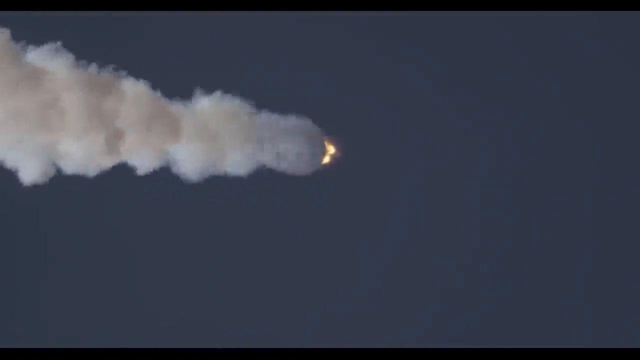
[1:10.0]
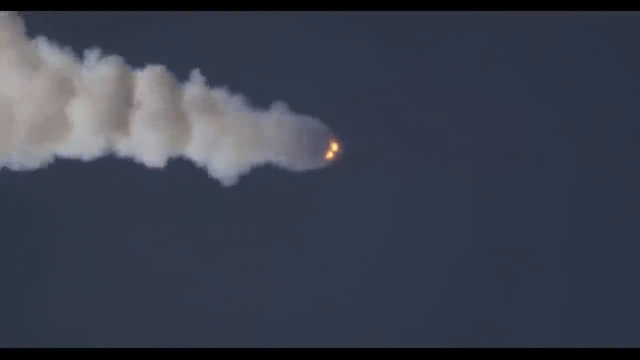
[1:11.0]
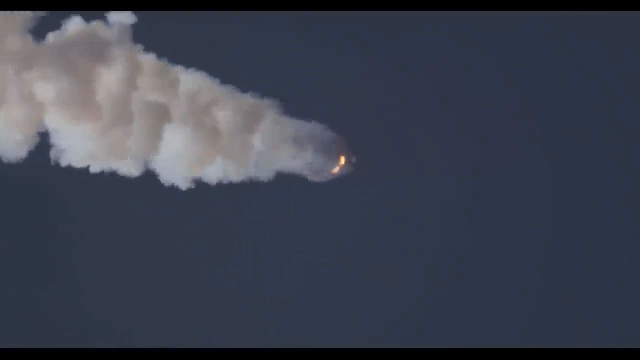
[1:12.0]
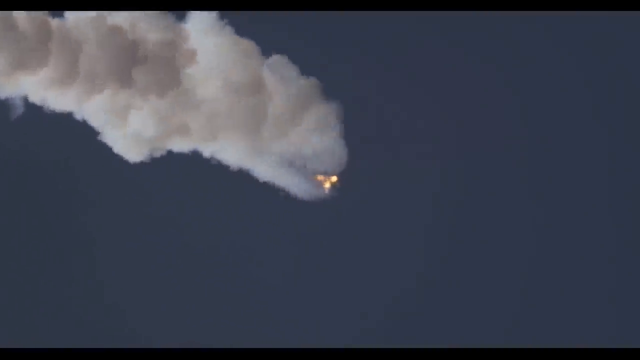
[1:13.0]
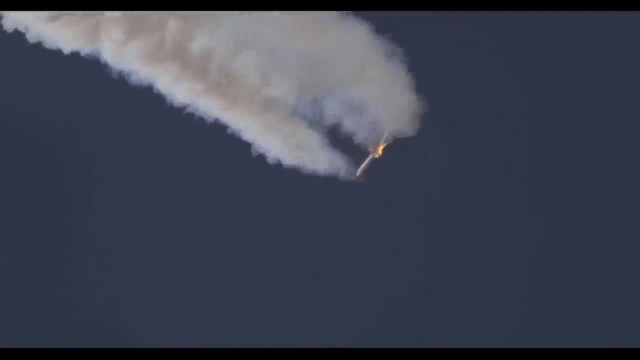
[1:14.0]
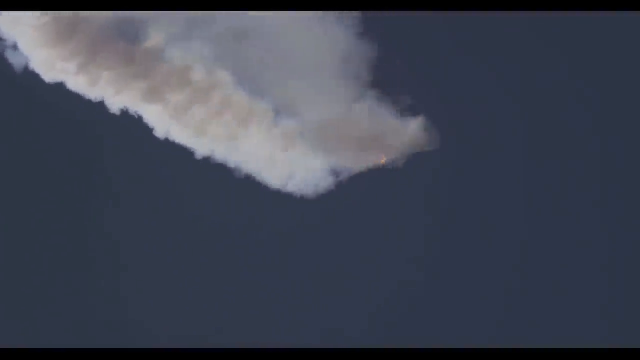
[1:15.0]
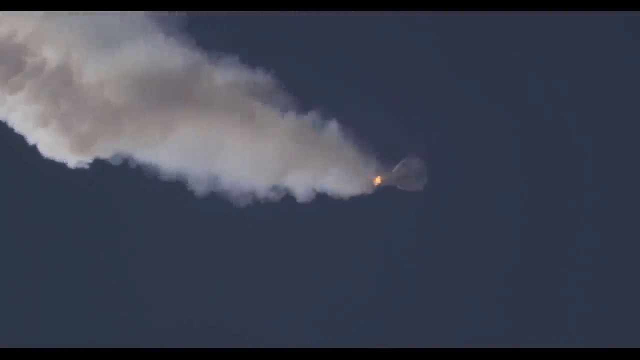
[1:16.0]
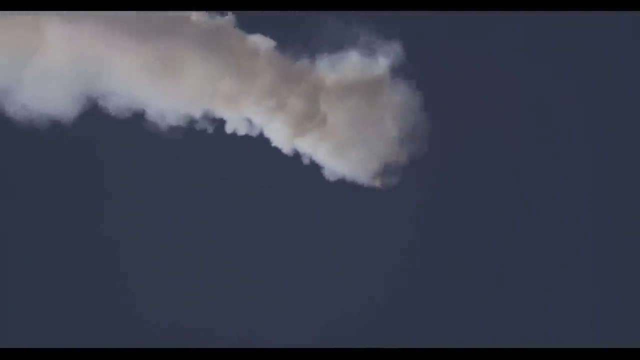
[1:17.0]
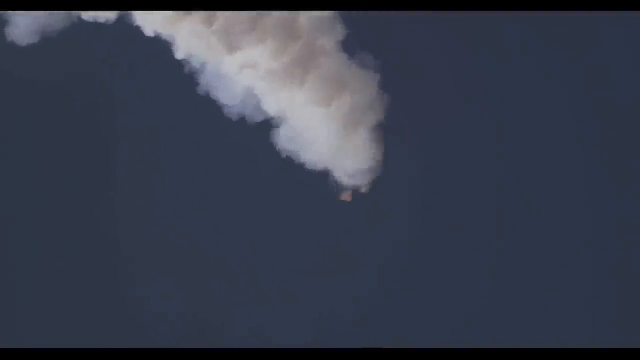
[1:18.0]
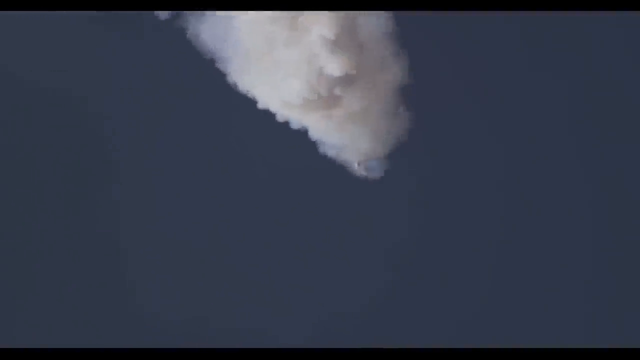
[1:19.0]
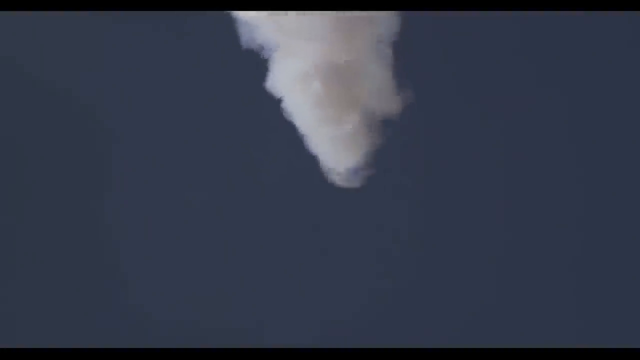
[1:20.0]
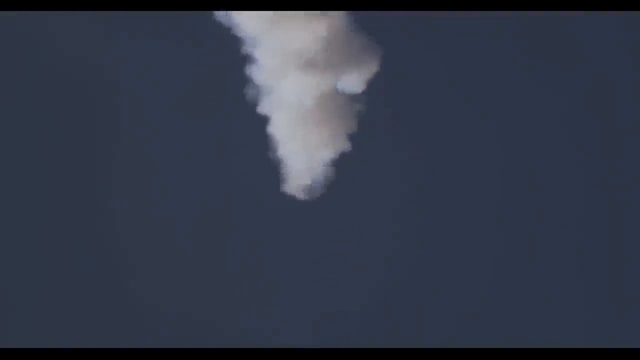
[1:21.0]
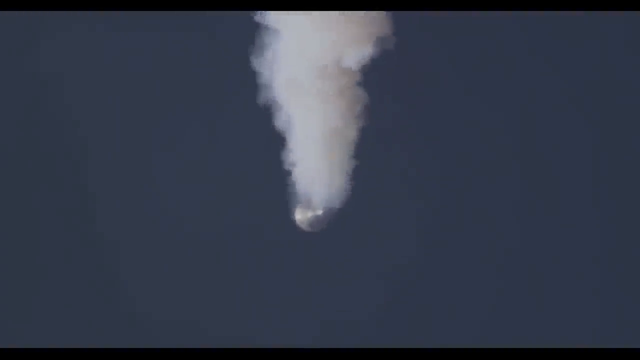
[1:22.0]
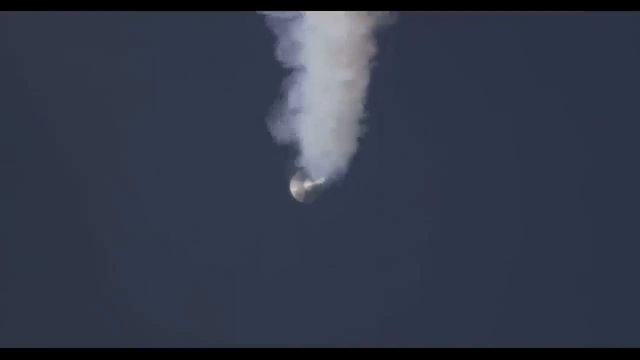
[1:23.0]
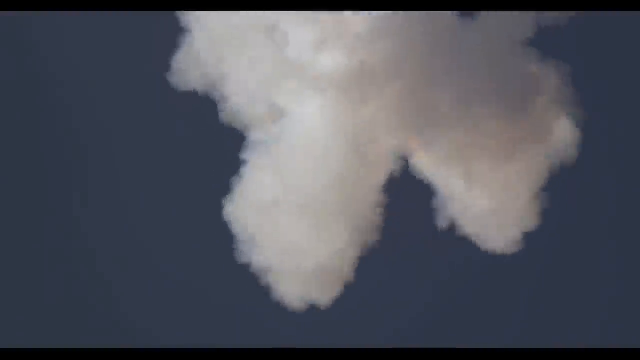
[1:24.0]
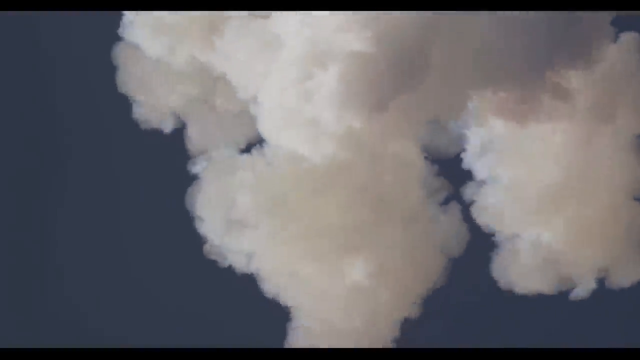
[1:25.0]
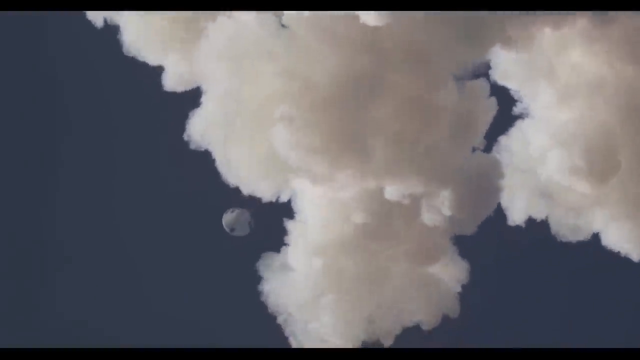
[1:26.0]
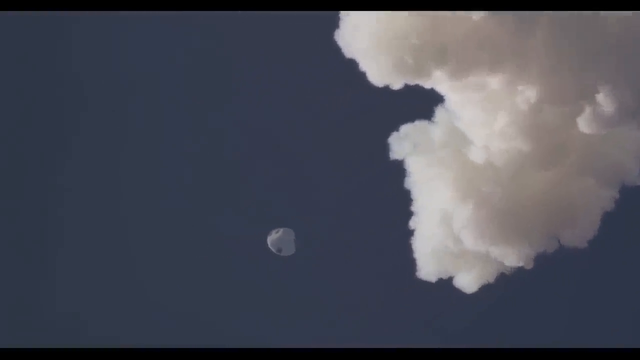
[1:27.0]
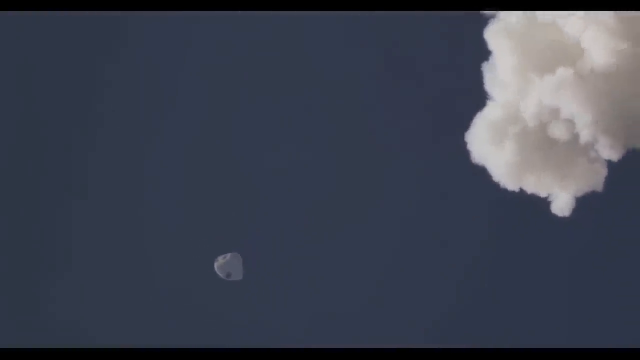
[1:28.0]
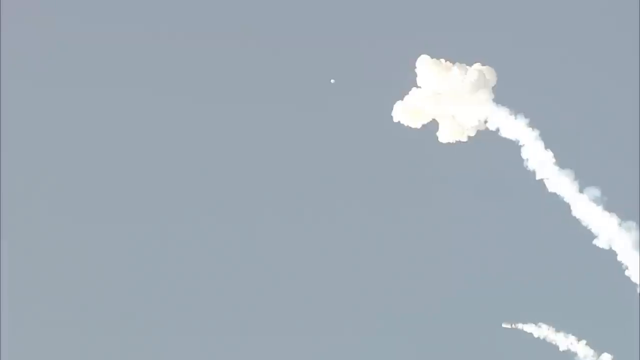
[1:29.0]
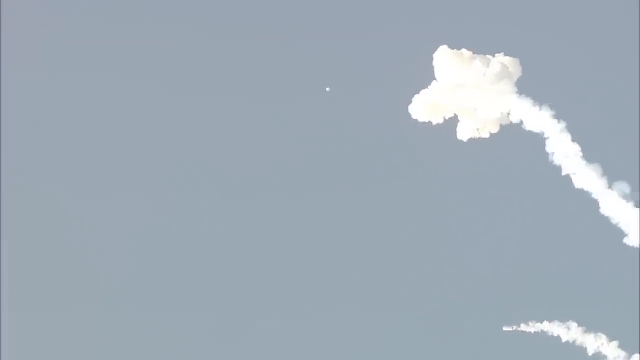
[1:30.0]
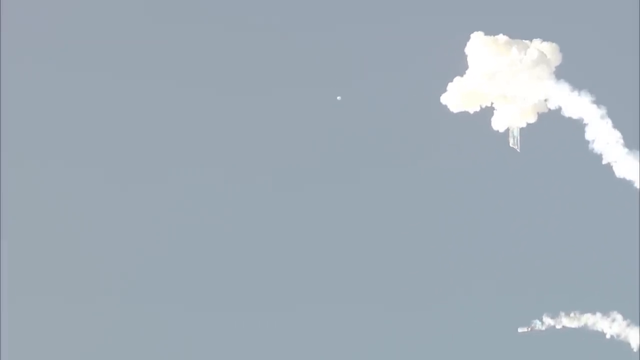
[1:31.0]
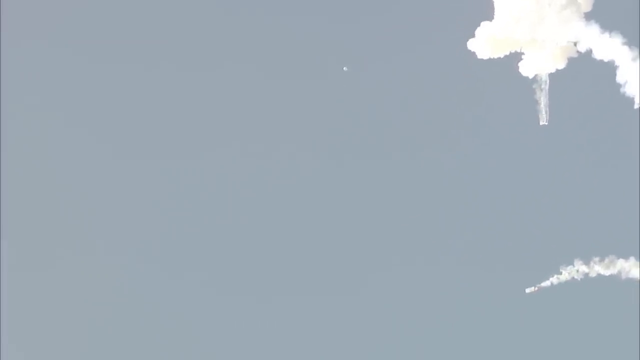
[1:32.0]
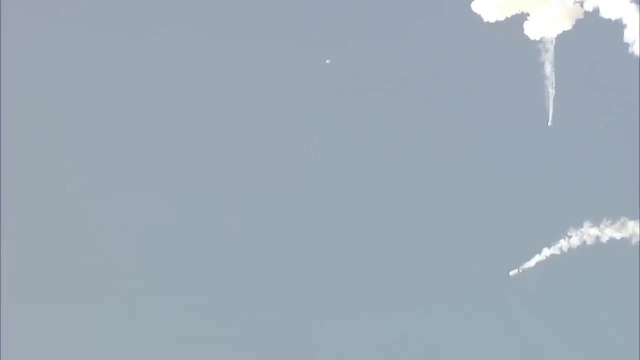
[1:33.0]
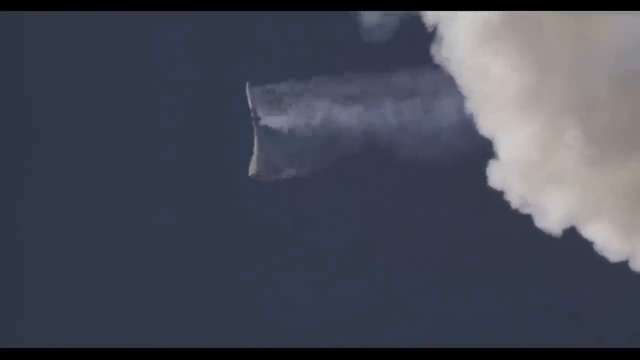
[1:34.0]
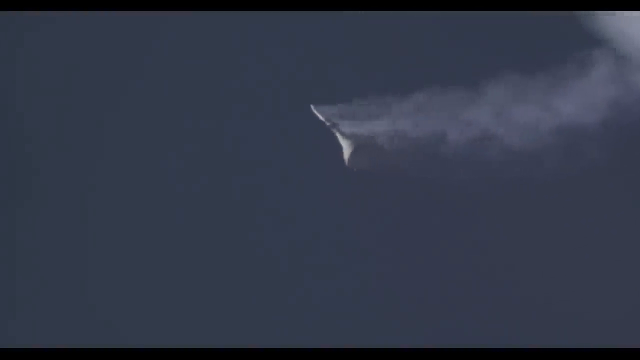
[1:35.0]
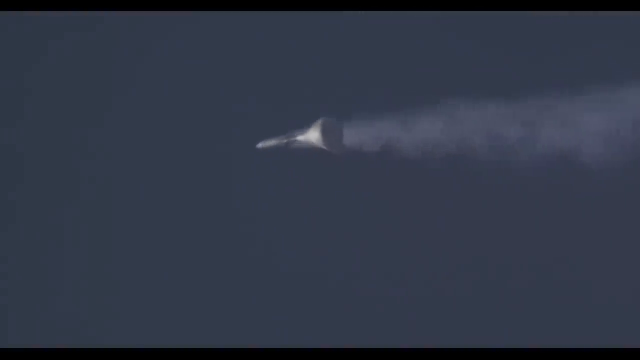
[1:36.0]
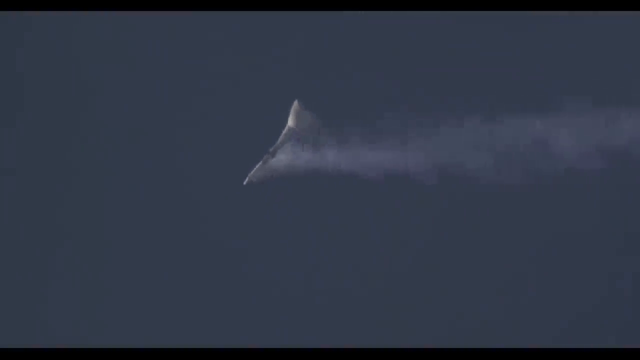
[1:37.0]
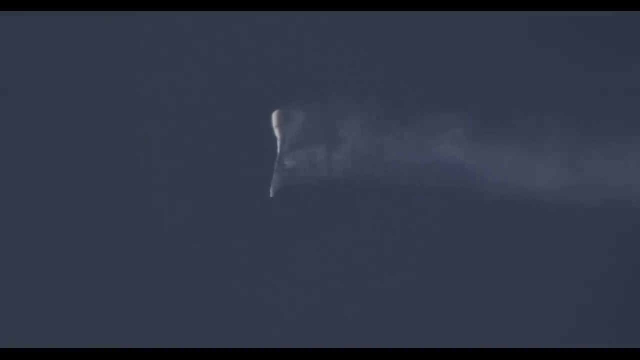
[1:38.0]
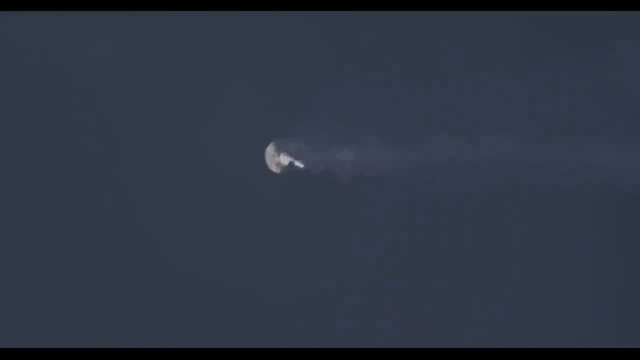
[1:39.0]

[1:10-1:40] A round chunk of the rocket, the part left after most of it was consumed by flame, hurtles through space. Because of the way it is filmed at an angle, it looks like it is flying to the right. Smoke billows from the left side, and the top part is still on fire with little orange flames, which then all kind of go out. The piece starts to fall downward with smoke pouring from the top, then more smoke gushes out like a starfish and a tiny component flies out. The camera pans back to the smoke, which gushes and billows everywhere, looking like fluffy clouds in the sky. The component falls away; in a distant shot it looks like a tiny white dot falling to the left, with the smoke on the right, and something else is also falling with a small trail of smoke behind it on the right. A close-up shows the component flying through the sky, its top still smoking and leaving a wispy trail. It looks like a golf tee and slowly rotates in the sky, which looks dark blue around it, while the trailing smoke slowly dissipates into the air.